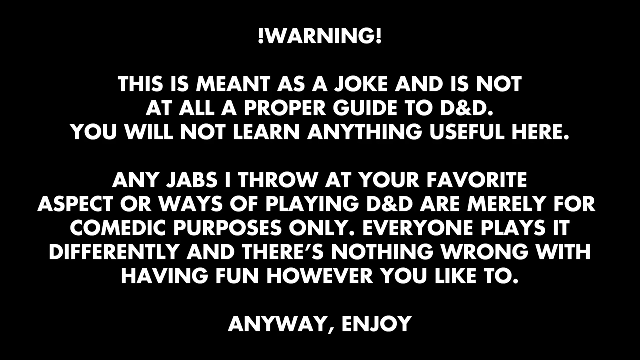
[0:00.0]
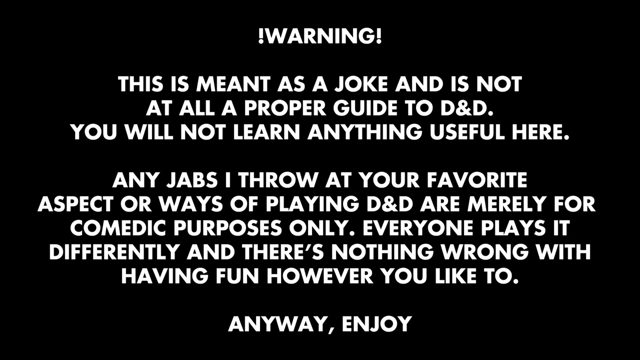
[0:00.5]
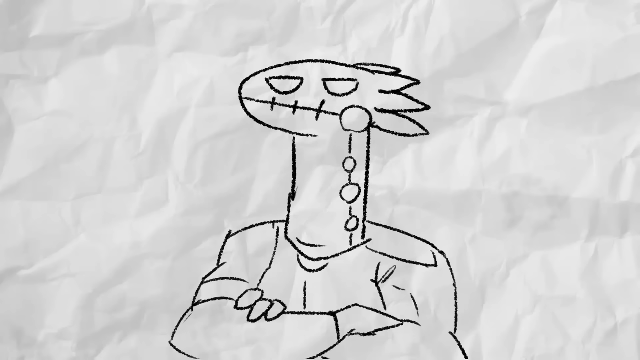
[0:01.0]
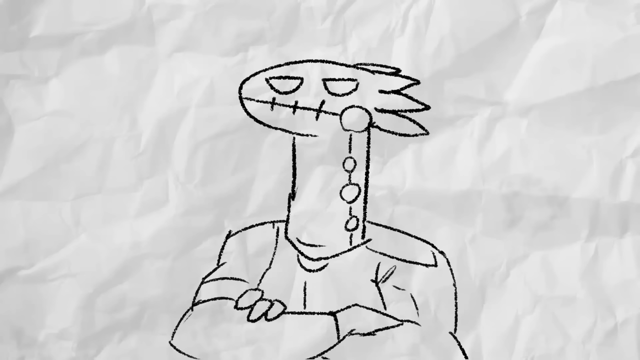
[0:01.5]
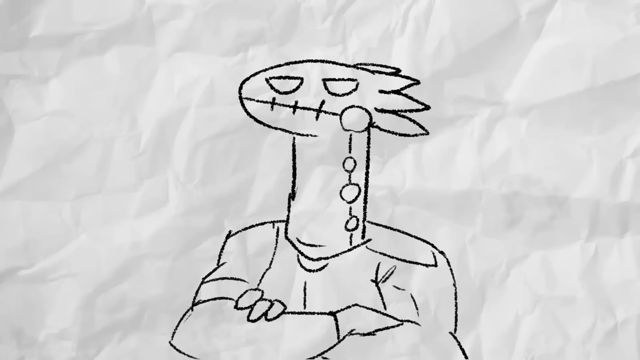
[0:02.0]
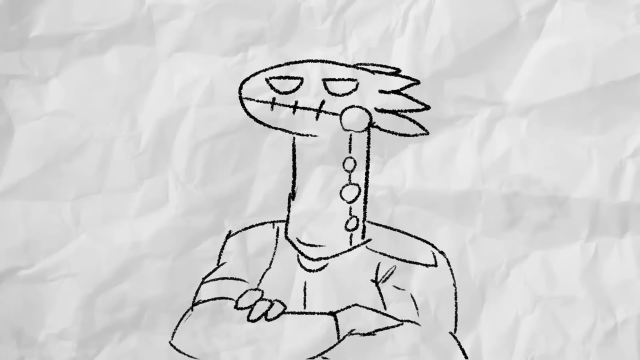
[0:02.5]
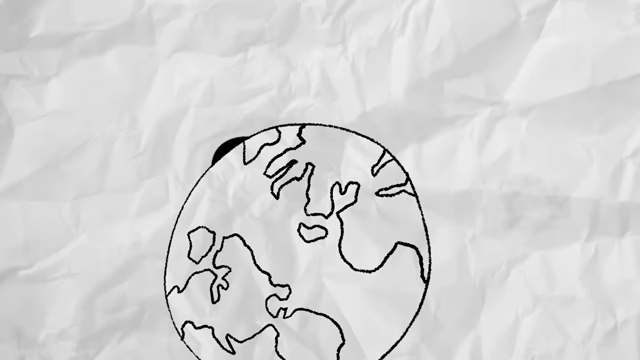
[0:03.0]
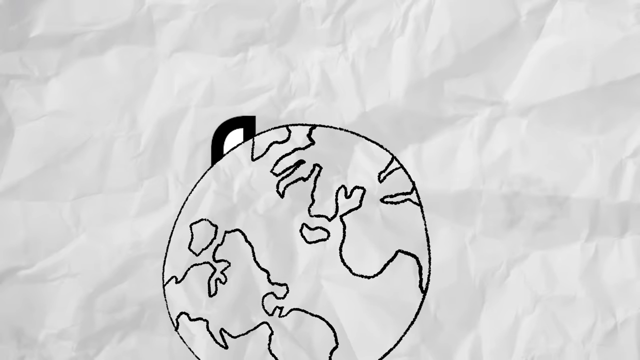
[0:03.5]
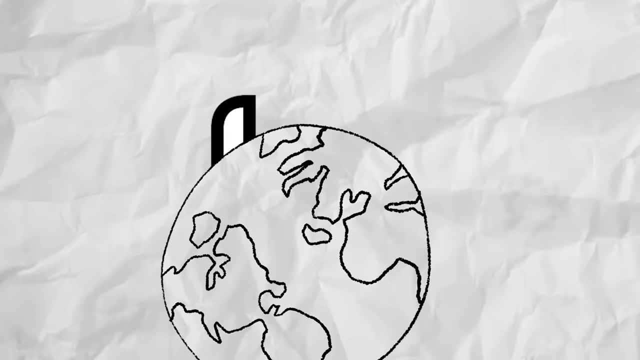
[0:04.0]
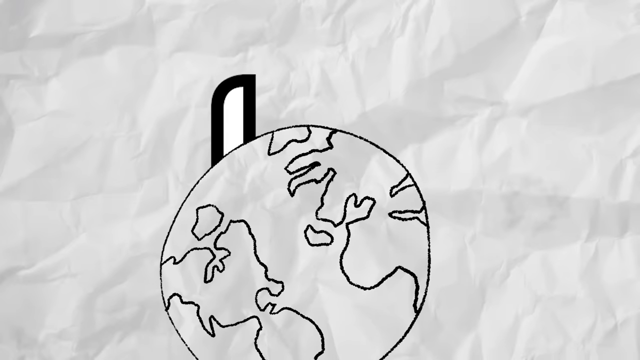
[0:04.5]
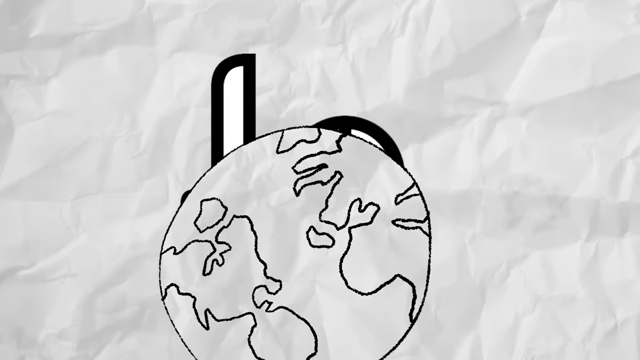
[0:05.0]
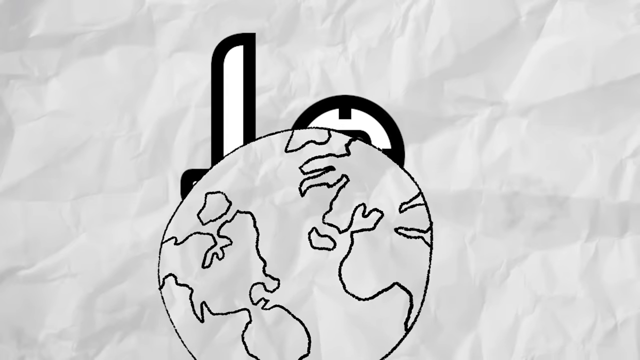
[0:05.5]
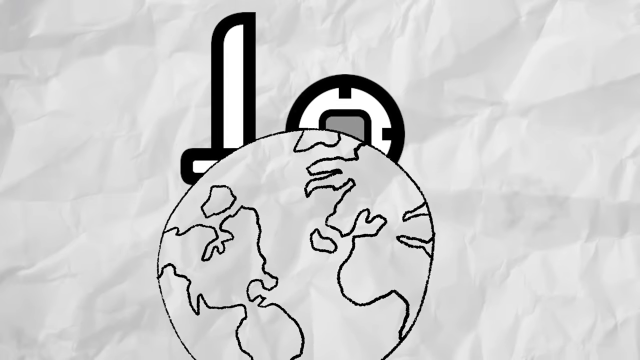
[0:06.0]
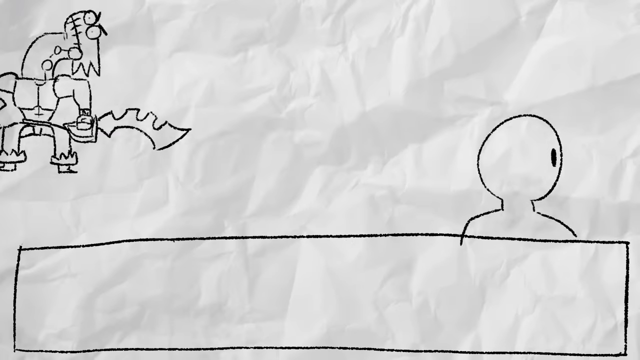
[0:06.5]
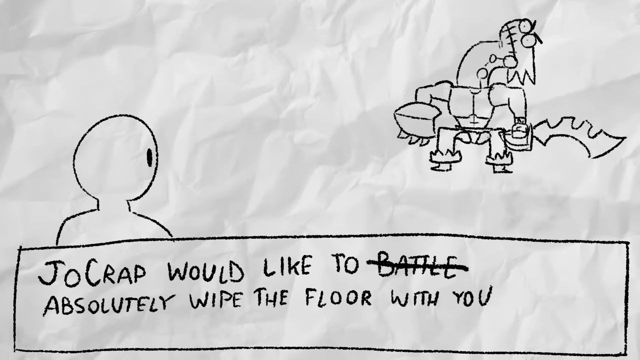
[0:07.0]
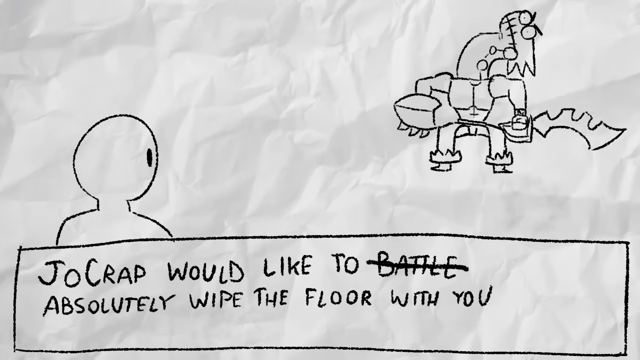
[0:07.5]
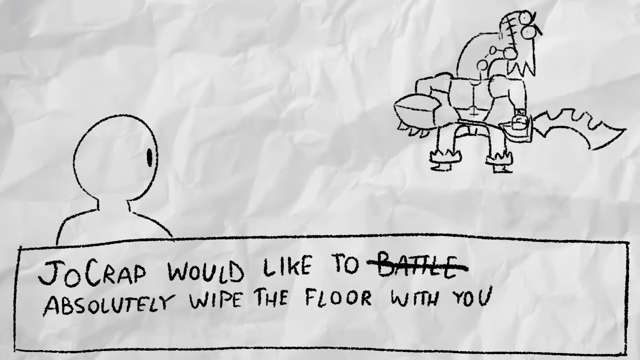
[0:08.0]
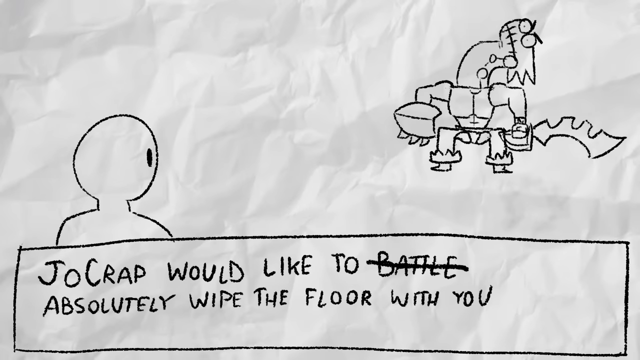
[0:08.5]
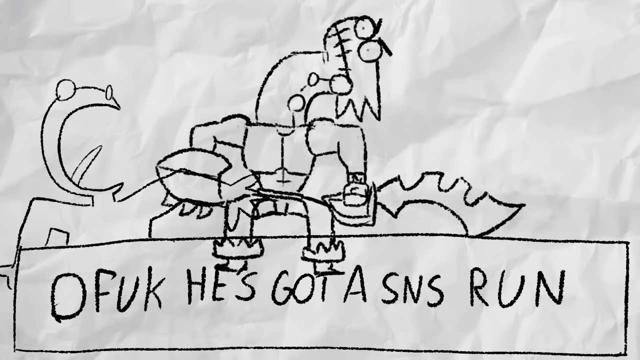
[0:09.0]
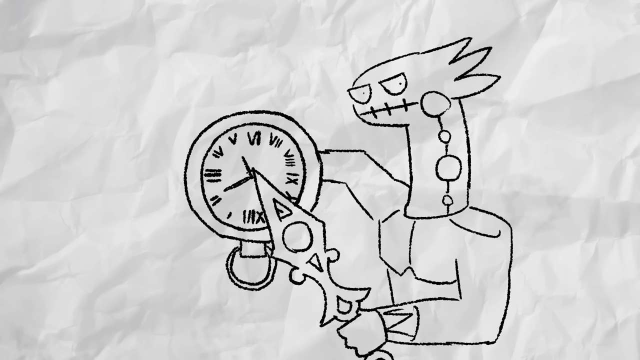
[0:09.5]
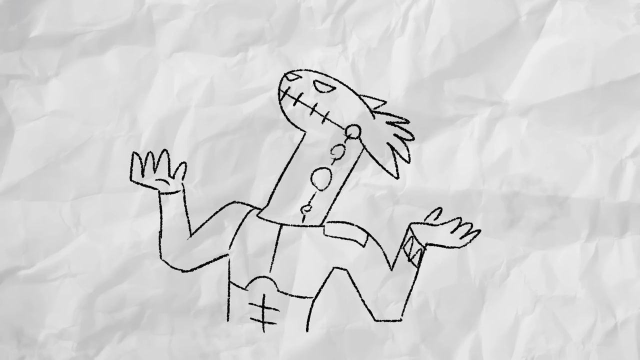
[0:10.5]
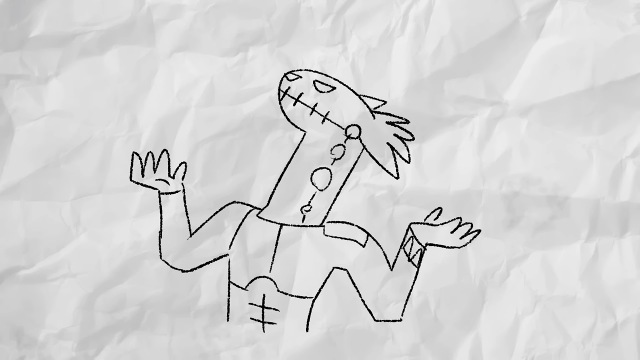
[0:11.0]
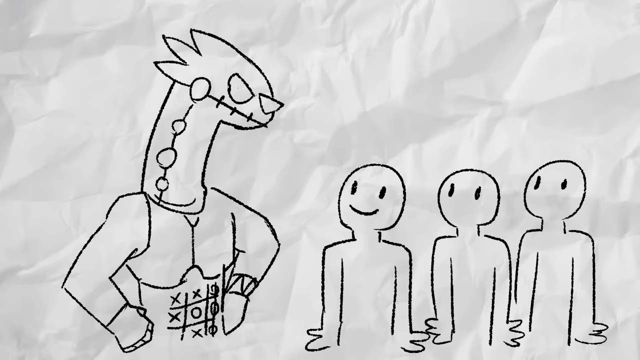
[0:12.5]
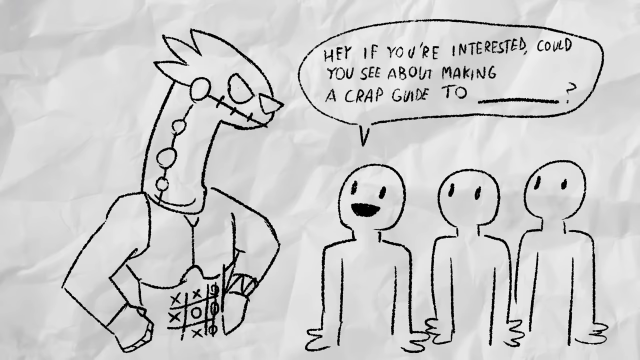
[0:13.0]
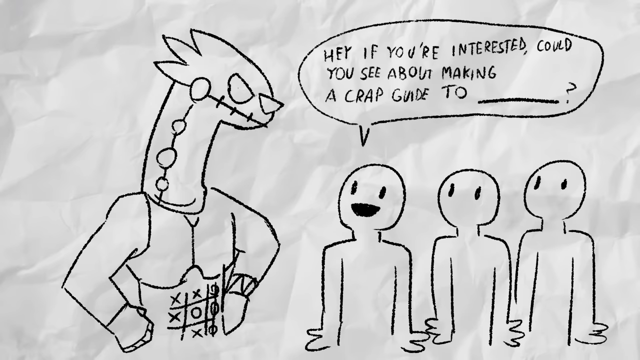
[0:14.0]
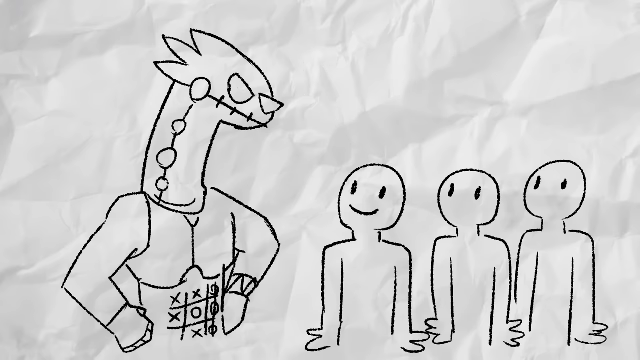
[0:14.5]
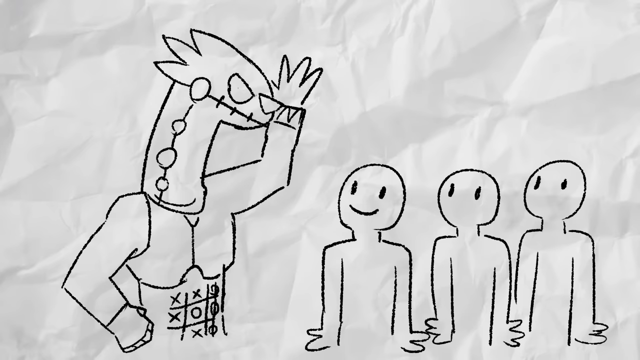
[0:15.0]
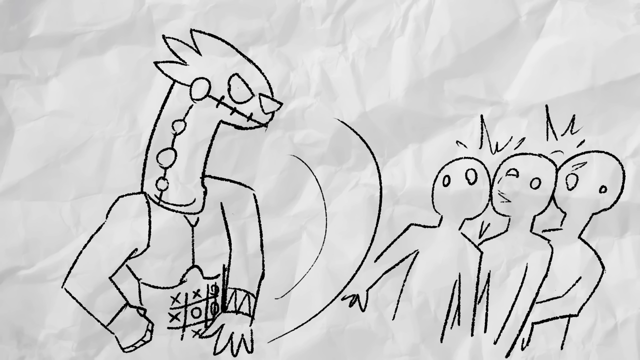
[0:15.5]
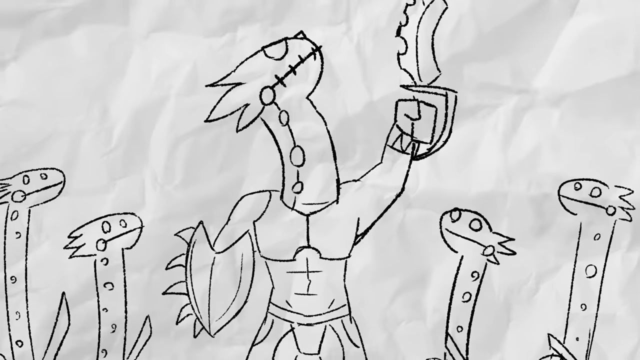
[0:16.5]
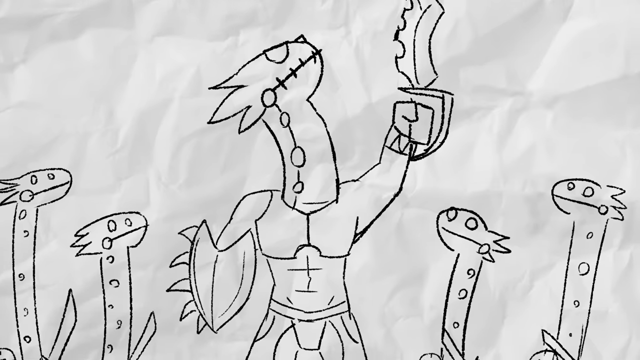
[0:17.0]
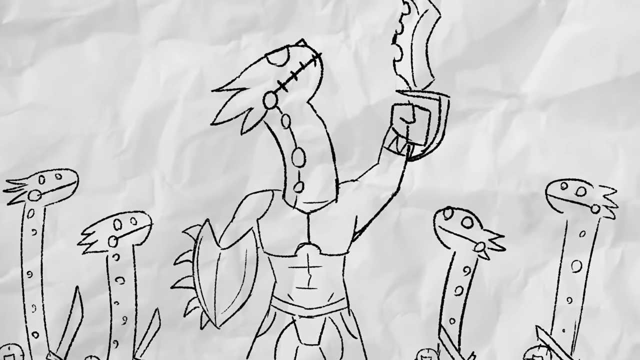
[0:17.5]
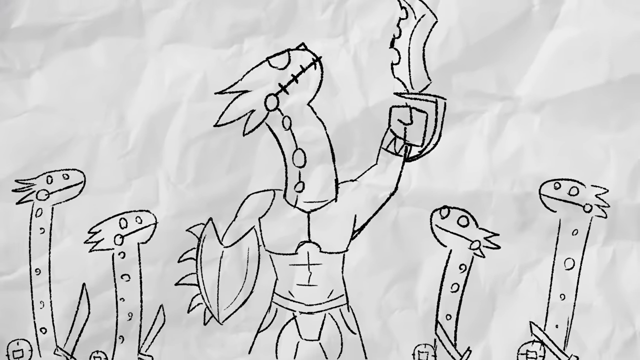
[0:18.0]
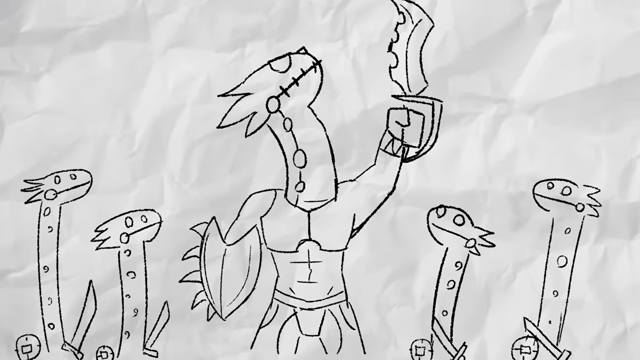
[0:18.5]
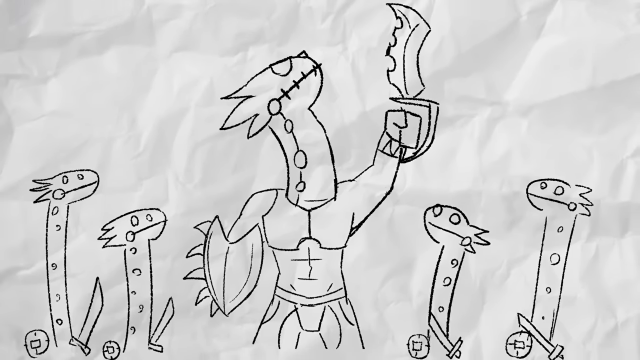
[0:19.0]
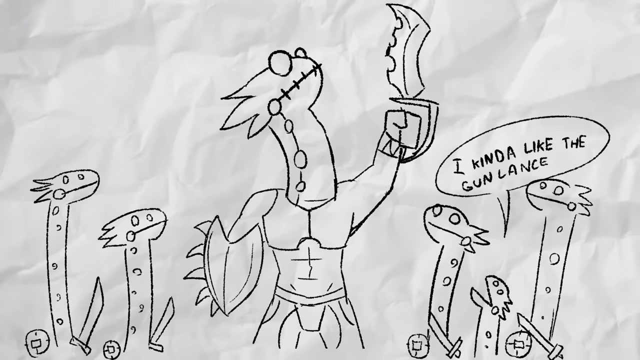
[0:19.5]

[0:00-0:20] White text on a solid black background reads "WARNING. This is meant as a joke and is not at all a proper guide to D&D. You will not learn anything useful here. Any jabs I throw at your favorite aspect or ways of playing D&D are merely for comedic purposes only. Everyone plays it differently and there's nothing wrong with having fun however you like to. Anyway, enjoy." The text stays on screen, then the scene moves to a white crumpled piece of paper with a black drawing of what looks to be a dinosaur in a sort of human form, crossing his arms. Next the earth is shown sort of moving in a circle, with a black and white object coming out of it. The scene transitions to a person with a little box at the bottom that says "Joe Craft would like to battle", which is crossed out, and "Absolutely wipe the floor with you." The monster dinosaur appears with a sword in one hand and something that sort of looks like a football in the other; his neck is sort of twisted and he bounces up and down. He runs toward the character, who has his tongue slightly out. Text at the bottom says "oh fuck he's got S&S run", and text quickly appears saying "he died out there." The dinosaur character points the blade at a clock, then looks up with his arms reached out. He stands with his hands on his hips looking down at three people; one of them has a mouth but the other two do not. A bubble over their heads says "hey if you're interested could you see about making a crap guide to blank?" He slaps all three of them across the face. He then lifts the sword in the air, with what looks to be giraffes or something in the background, and a bubble says "I kind of like the gunlance."